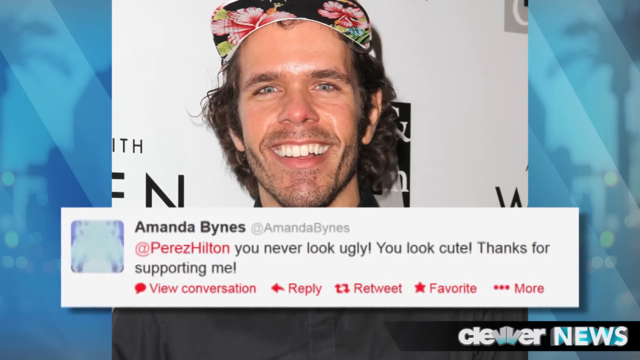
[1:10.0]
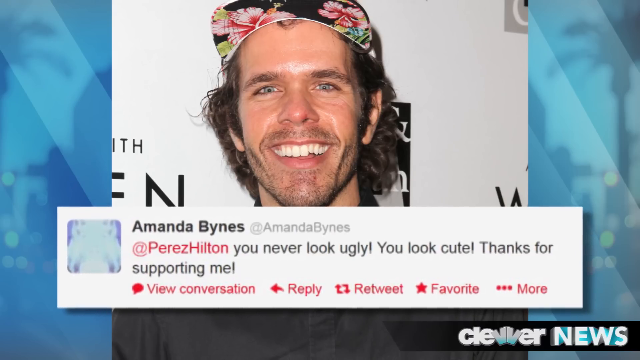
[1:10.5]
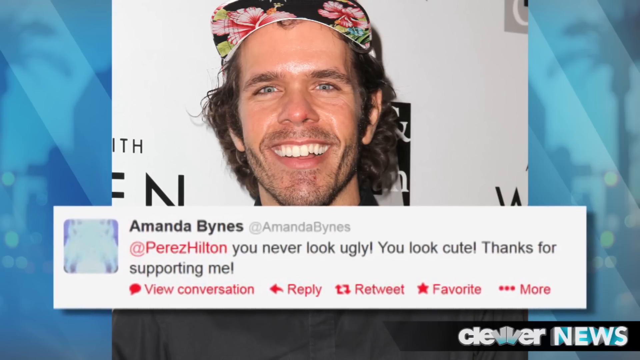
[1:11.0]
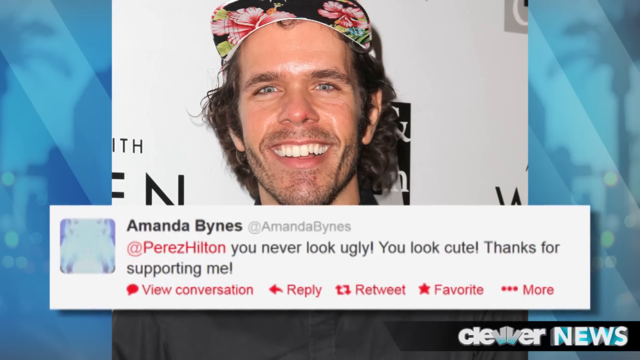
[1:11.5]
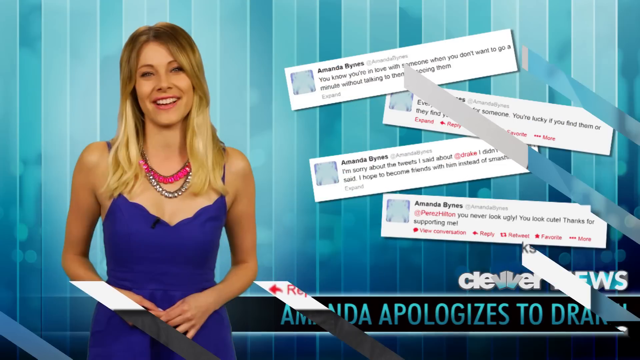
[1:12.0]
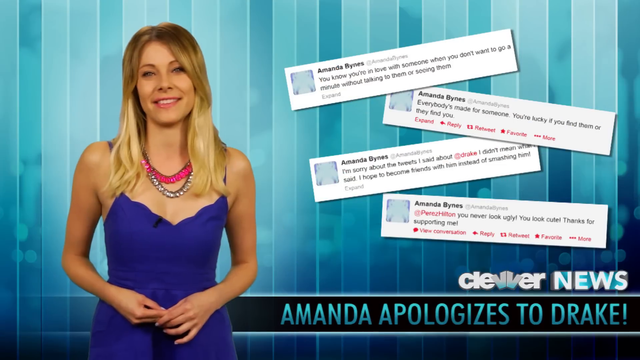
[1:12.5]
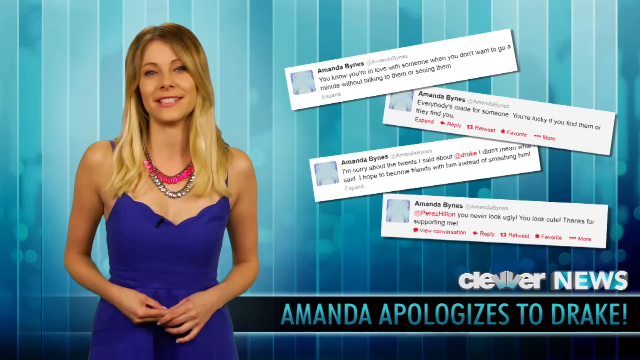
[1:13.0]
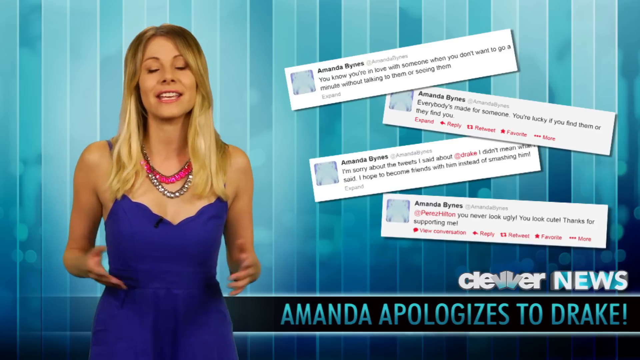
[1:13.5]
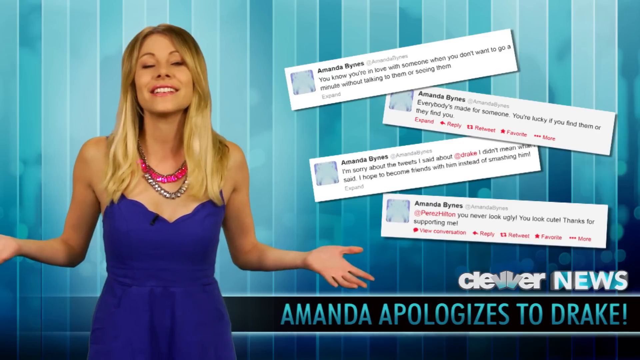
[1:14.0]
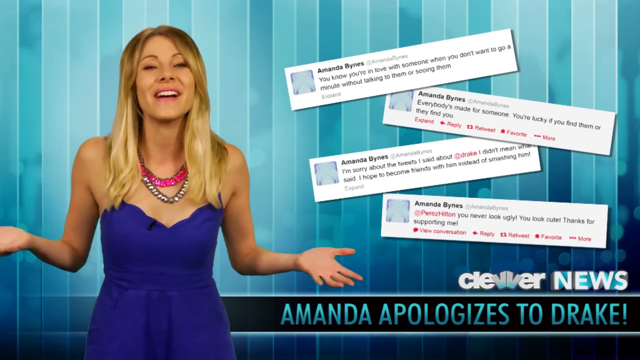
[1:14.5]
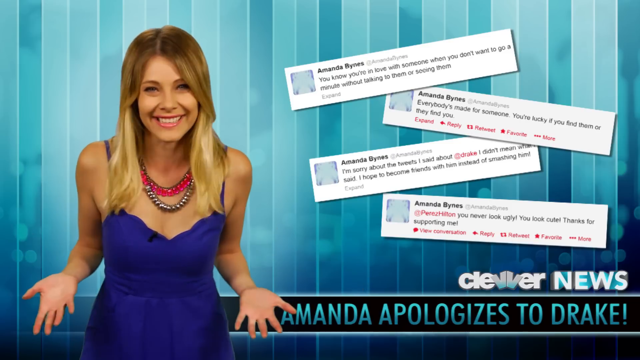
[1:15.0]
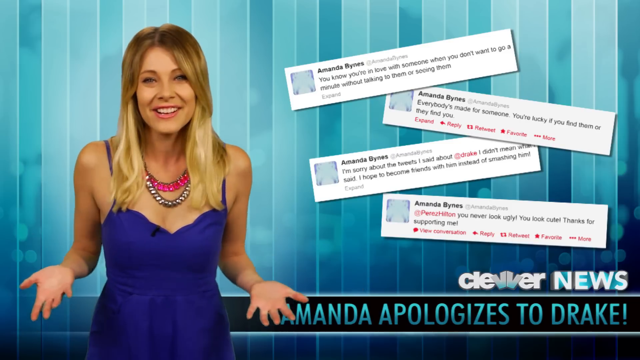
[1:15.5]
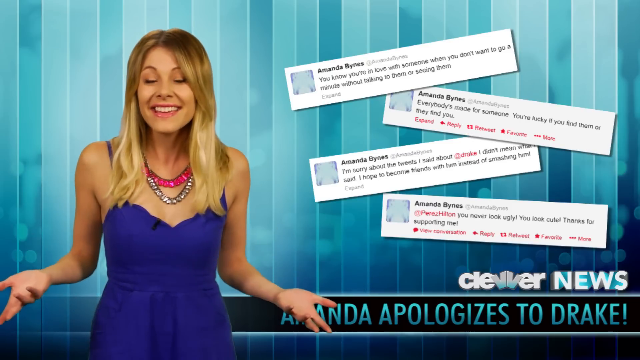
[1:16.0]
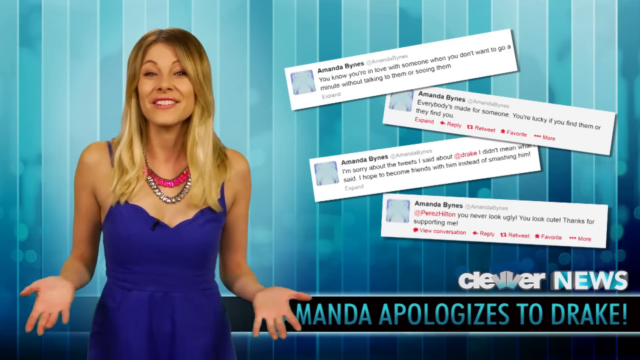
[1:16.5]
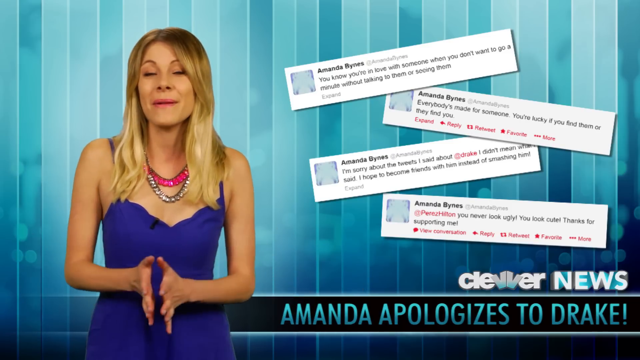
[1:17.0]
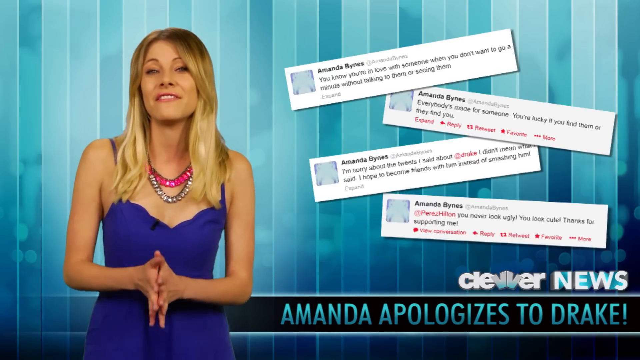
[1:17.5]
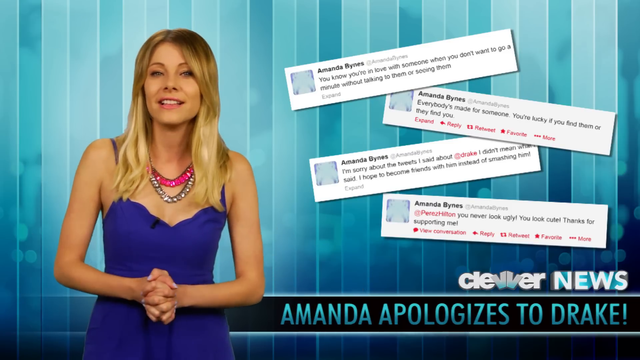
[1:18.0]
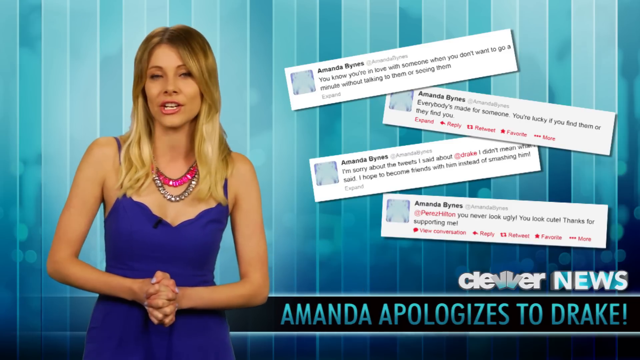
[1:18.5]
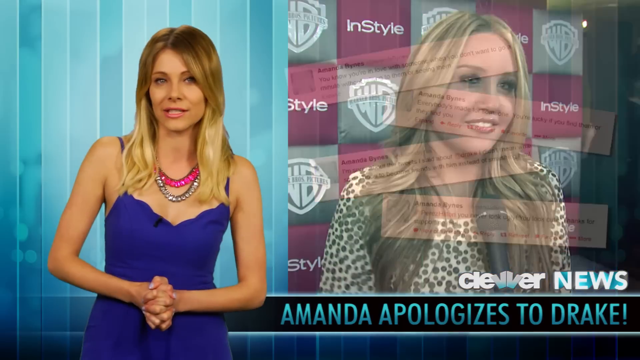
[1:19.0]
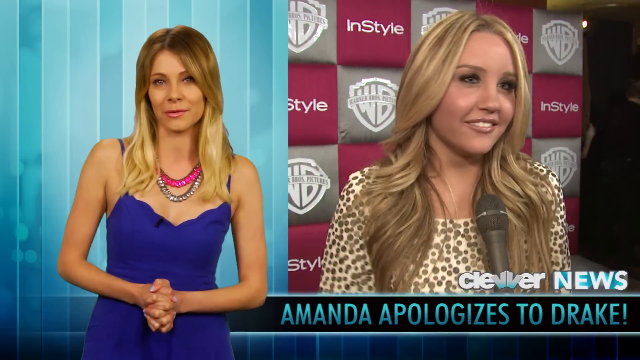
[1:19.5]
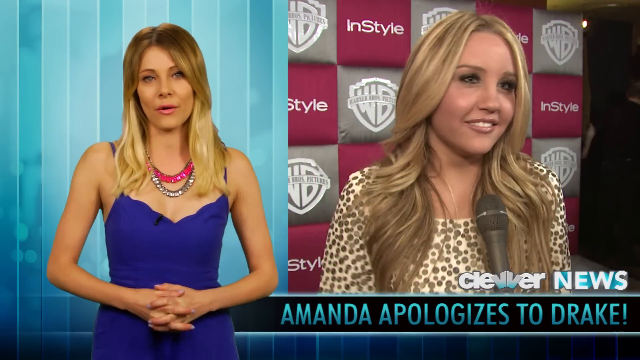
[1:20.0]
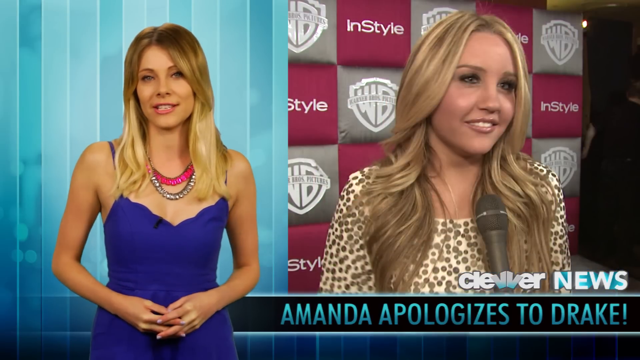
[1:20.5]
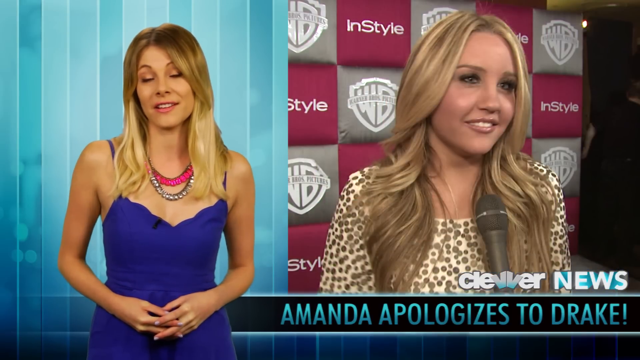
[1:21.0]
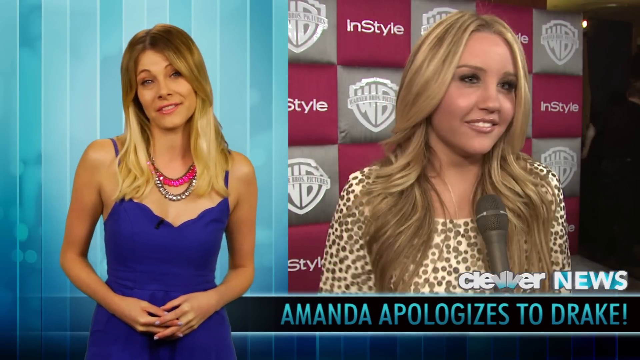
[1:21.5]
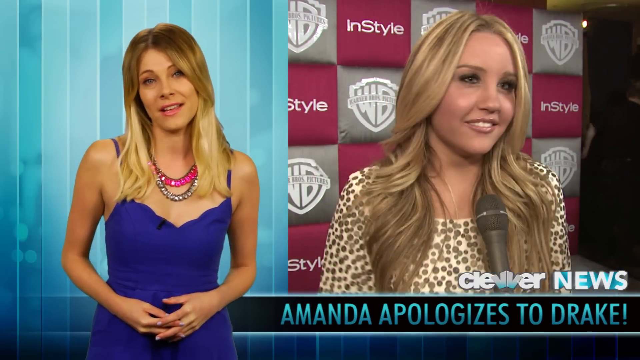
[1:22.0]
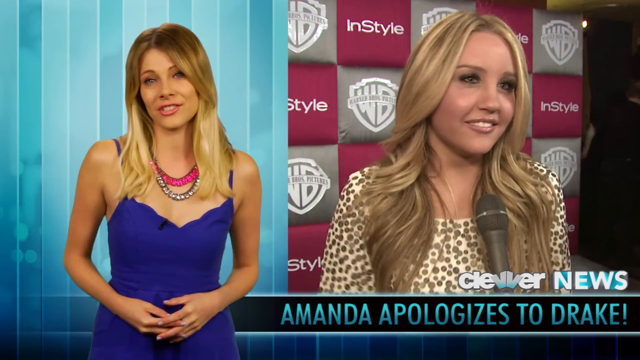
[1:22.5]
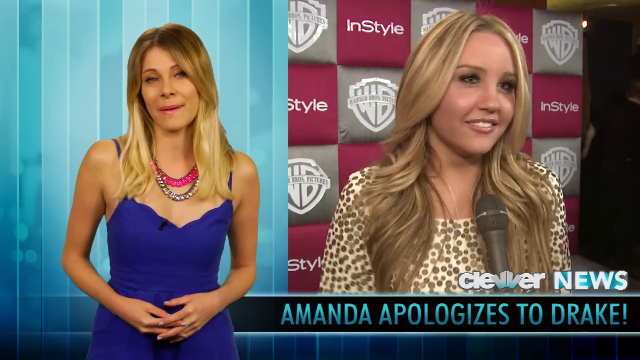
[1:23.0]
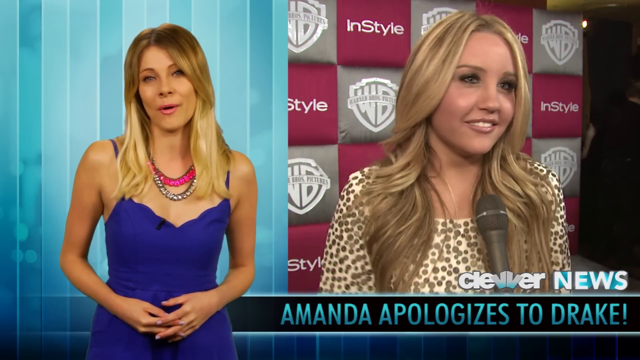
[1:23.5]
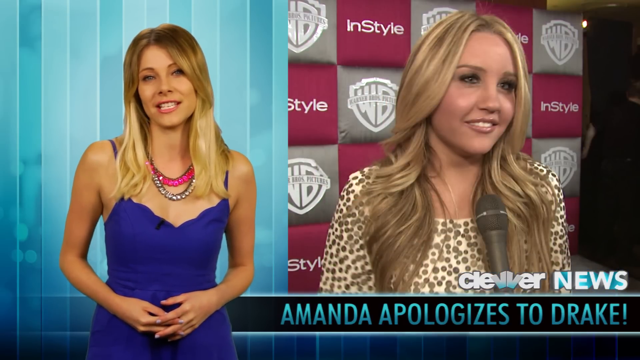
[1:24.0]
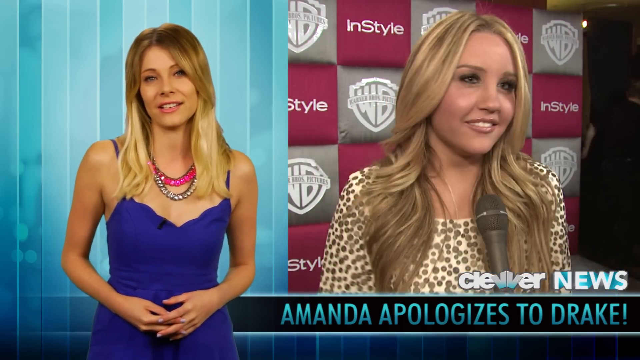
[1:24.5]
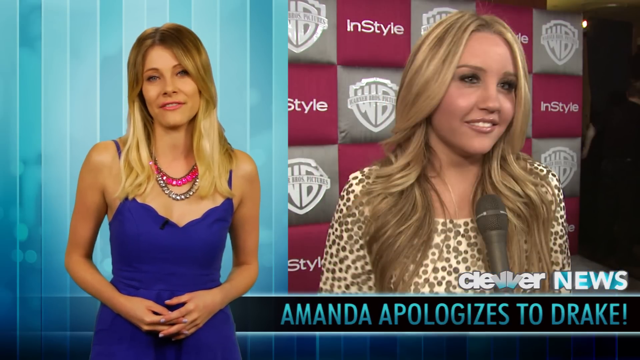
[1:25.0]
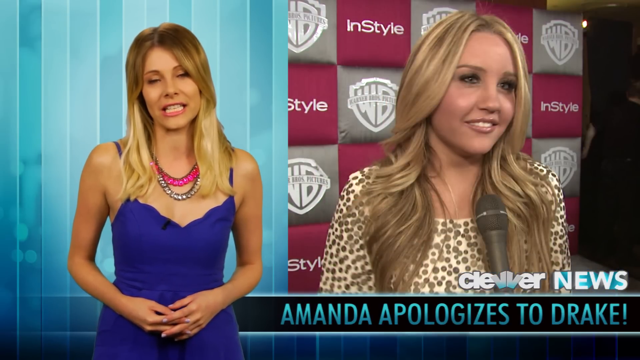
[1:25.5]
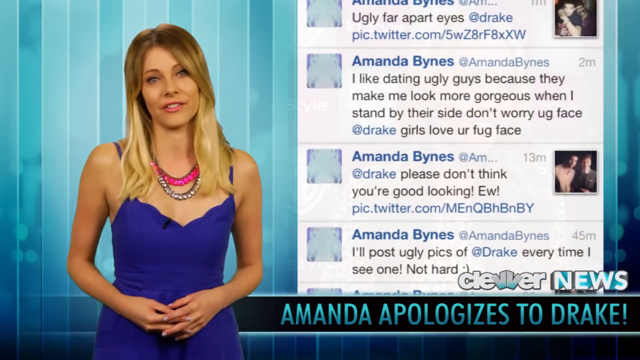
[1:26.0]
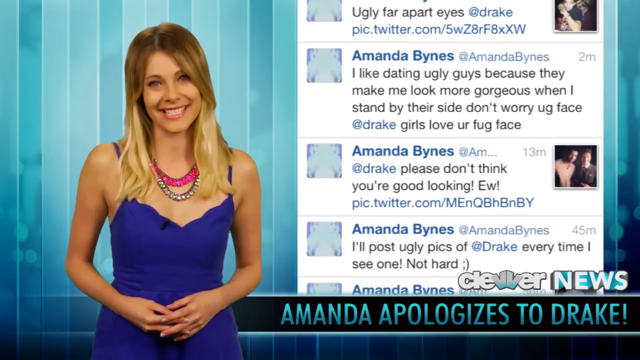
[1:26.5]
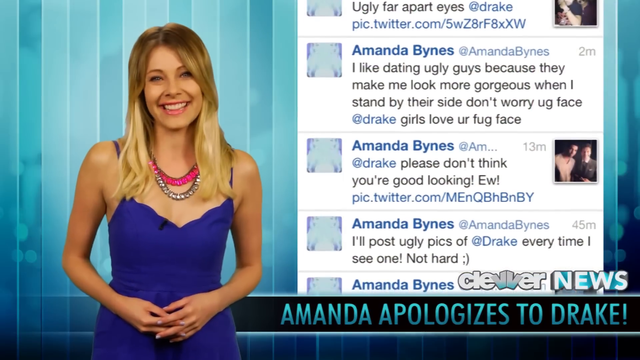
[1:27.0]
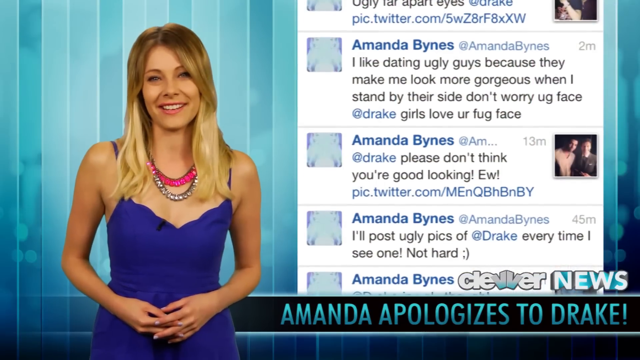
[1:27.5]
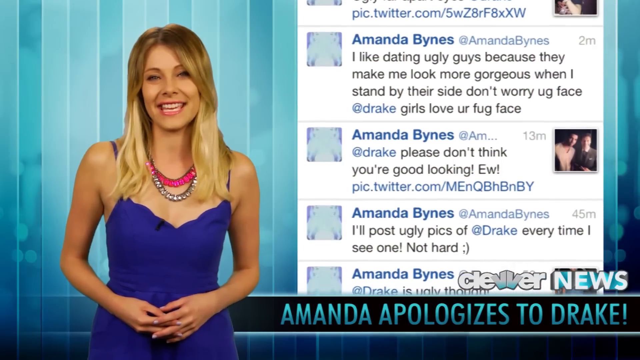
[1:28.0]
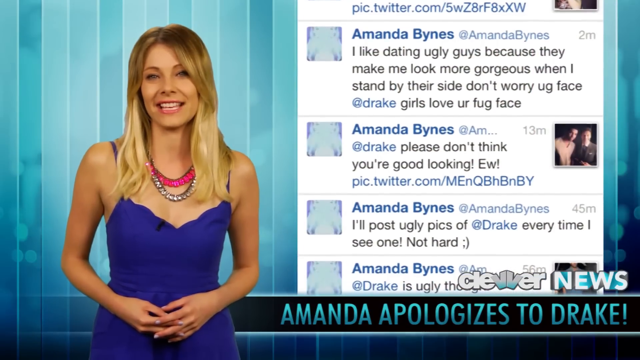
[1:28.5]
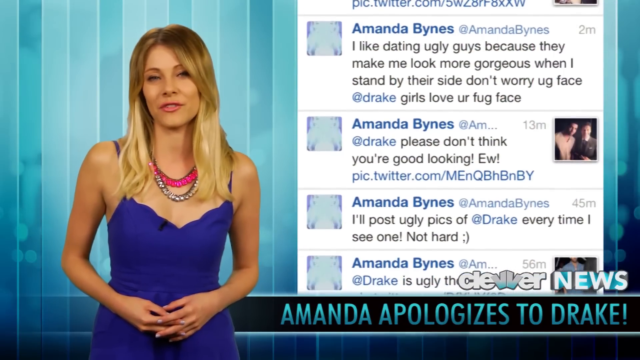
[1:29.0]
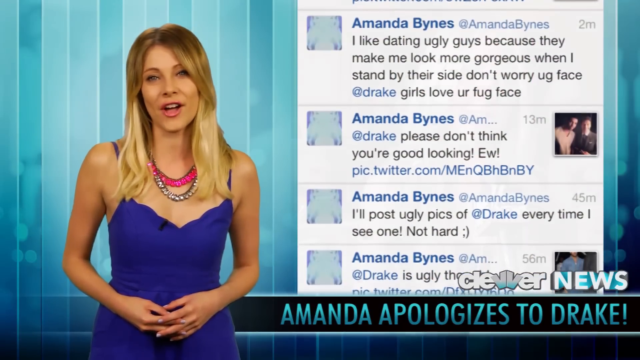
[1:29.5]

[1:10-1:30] Perez Hilton is on screen with Amanda Bynes's tweet "at Perez Hilton... You look cute. Thanks for supporting me." Text reads "Amanda apologizes to Drake," reported by Clever News. A lady on the screen has blonde hair and a blue dress and is very skinny. A couple of Amanda's tweets appear: "you know you're in love with someone when you don't want to go a minute without talking to him or seeing them" and "everybody's made for someone. You're lucky if you find them or they find you." The apology text reads "I'm sorry about the tweets I said about Drake. I didn't mean what I said. I hope to become friends with him instead of smashing him." Another picture of Amanda Bynes is shown, along with more of her tweets about Drake.